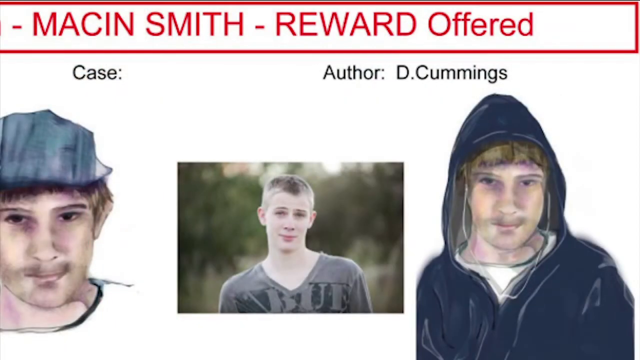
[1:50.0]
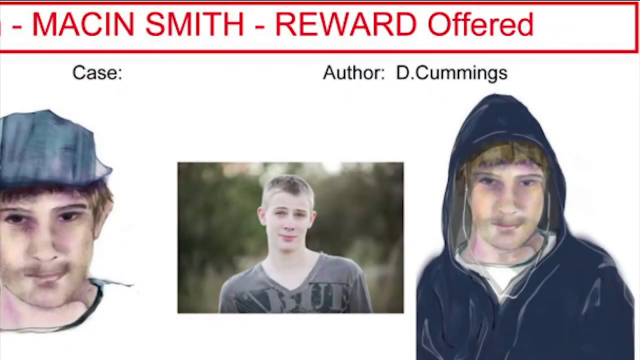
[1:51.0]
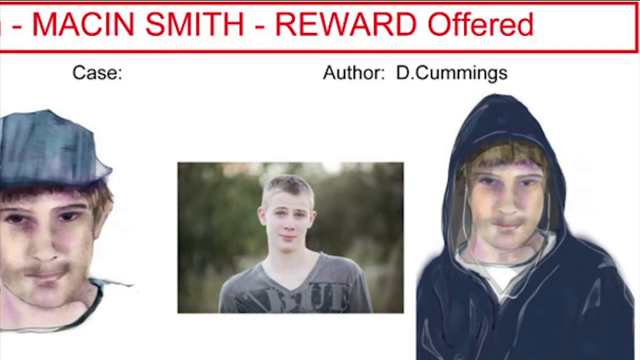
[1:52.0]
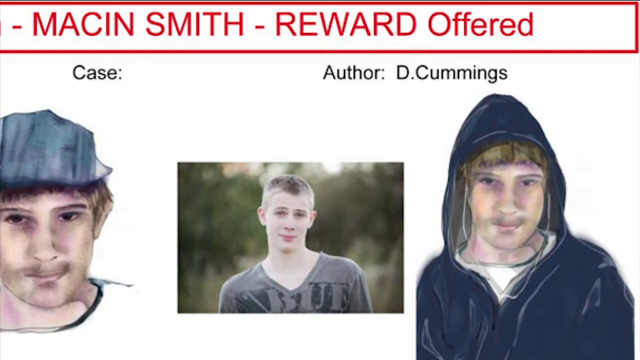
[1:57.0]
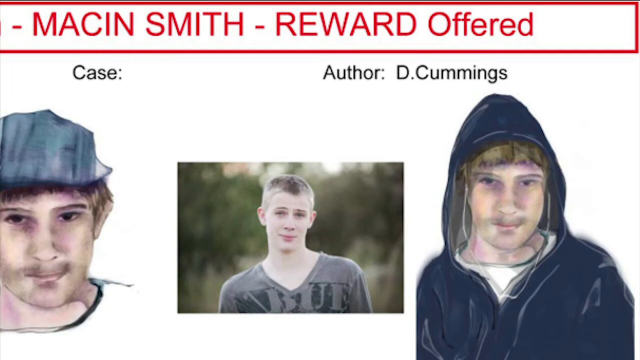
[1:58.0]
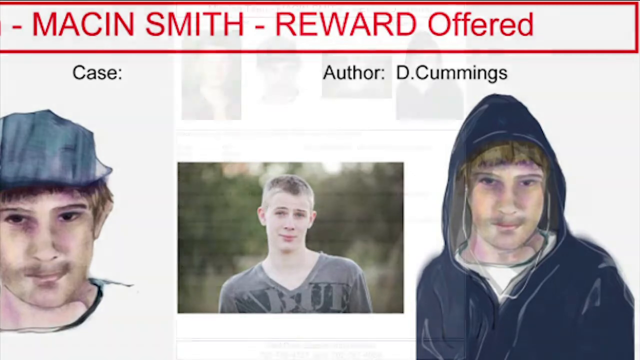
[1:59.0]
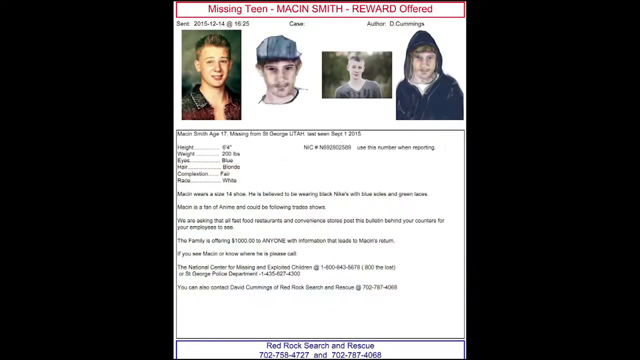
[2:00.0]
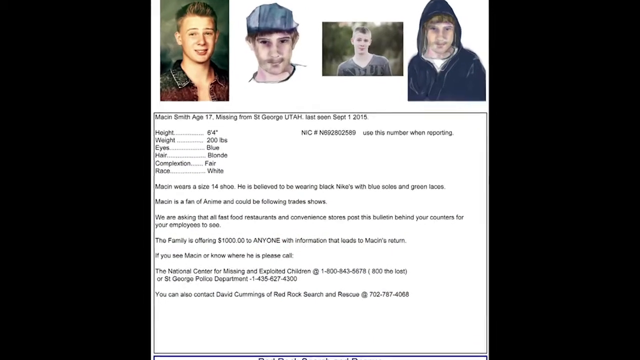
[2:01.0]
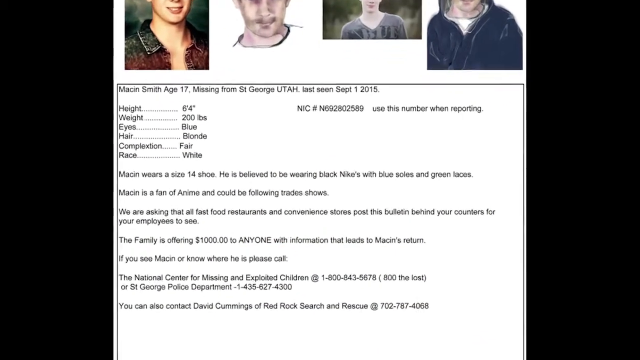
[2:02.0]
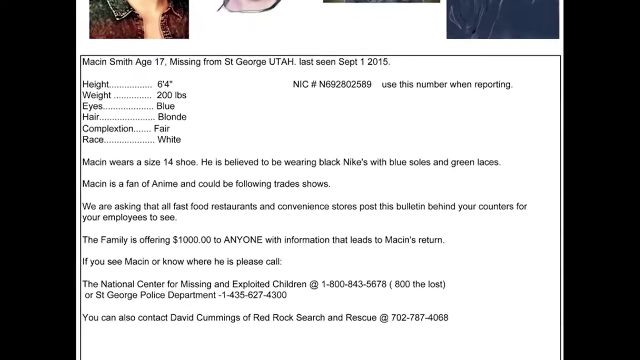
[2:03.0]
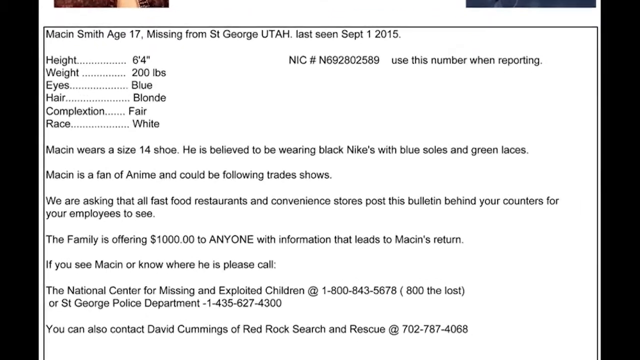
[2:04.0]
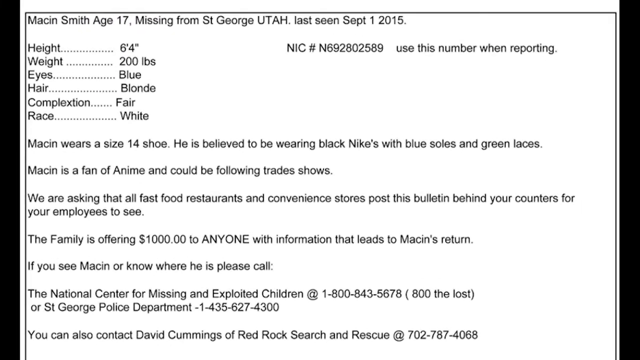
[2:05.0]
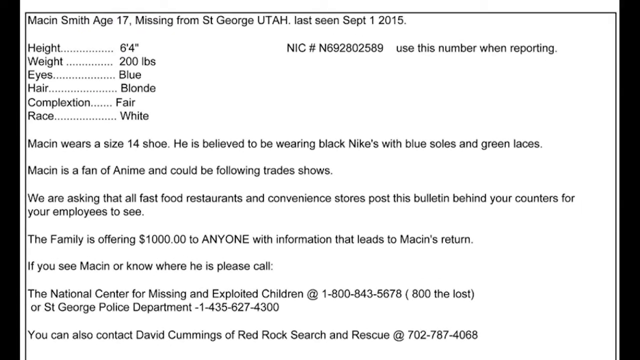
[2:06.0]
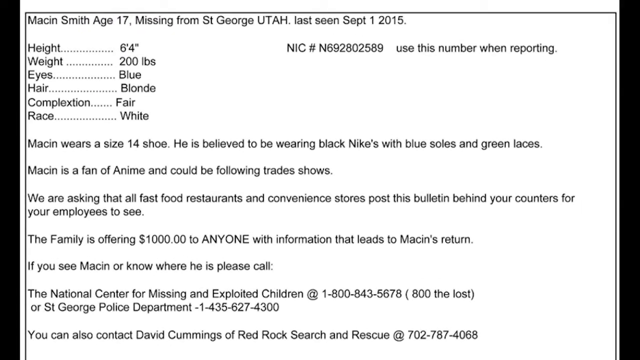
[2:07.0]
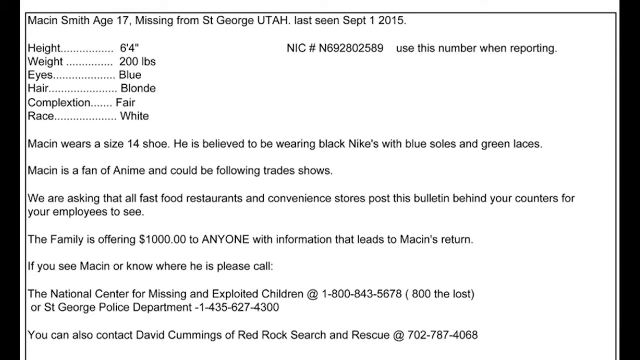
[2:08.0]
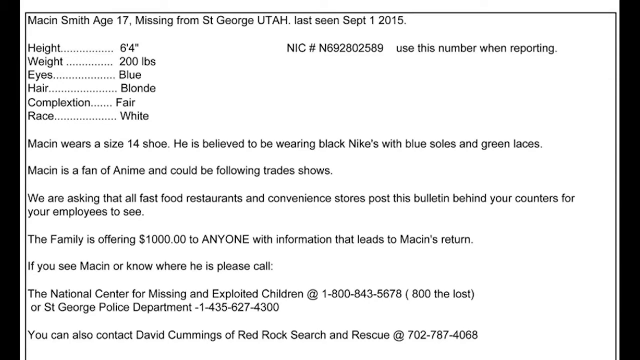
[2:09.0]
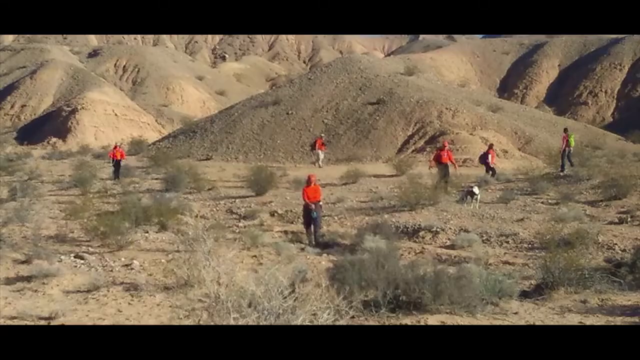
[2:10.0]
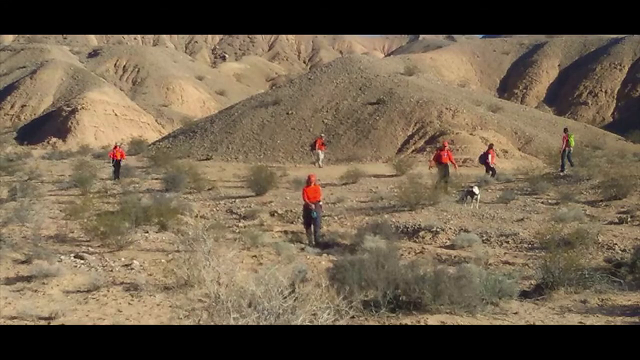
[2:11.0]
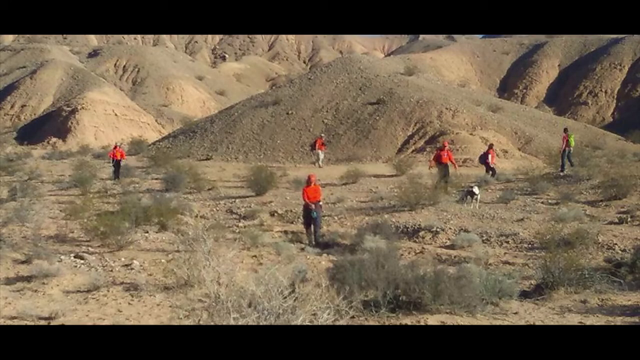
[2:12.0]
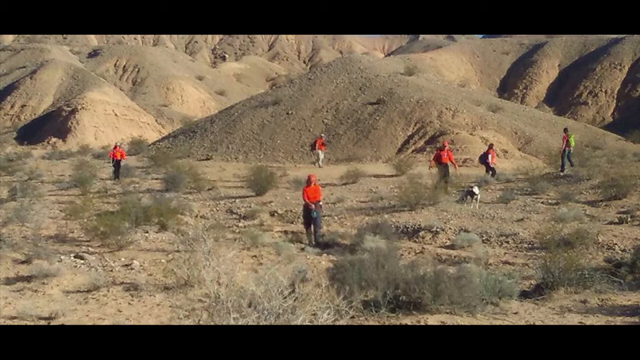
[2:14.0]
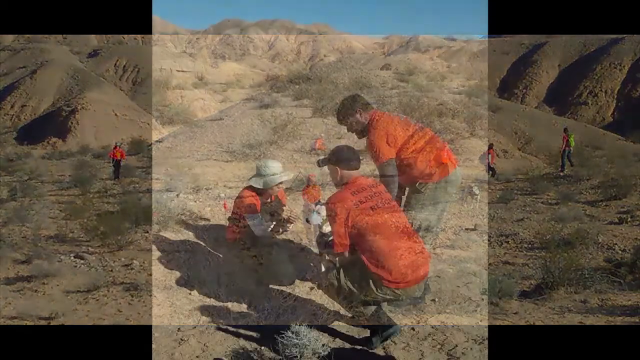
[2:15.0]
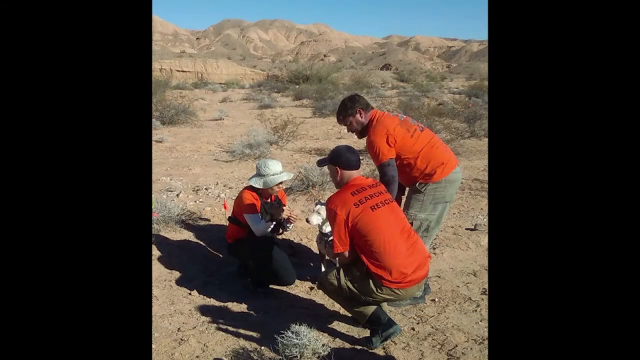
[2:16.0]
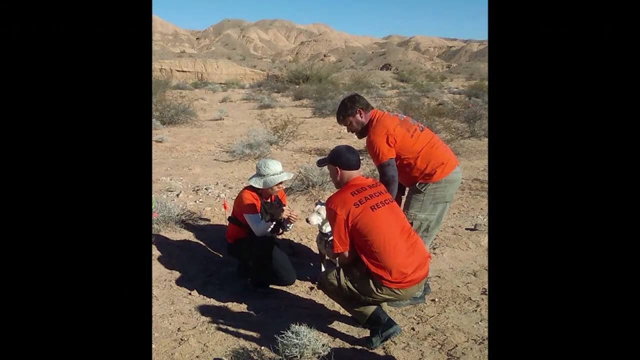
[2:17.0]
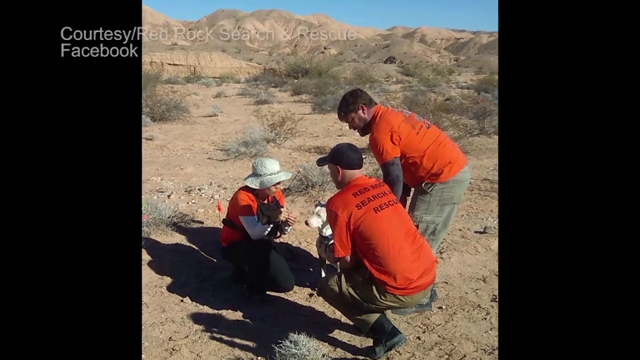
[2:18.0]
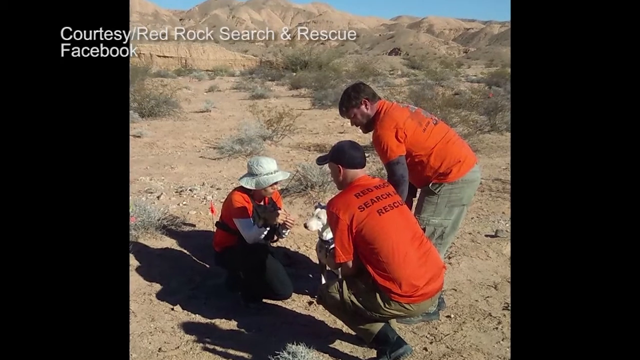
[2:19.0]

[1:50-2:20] A statement says that a reward for finding Macin Smith has been offered by Red Rock Search and Rescue, and the author of the post is identified as D. Cummins. The post features three photos of Macin: one of him looking shady and stubble-faced in a hat, one in the center of him looking fresh and clean, and one on the right of him wearing a hoodie and also looking a bit shady. The pictures stay on screen for a while, then the view zooms in on the missing poster, which reads: "Mackin is a fan of anime and could be following trade shows. We are asking that all fast food restaurant and convenience stores post this bulletin behind your counters for your employees to see. The family is offering $1,000 to anyone with information that leads to Mackin's return. If you see Mackin or know where he is, please call."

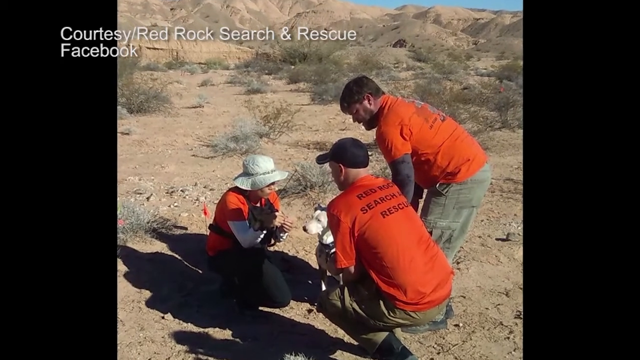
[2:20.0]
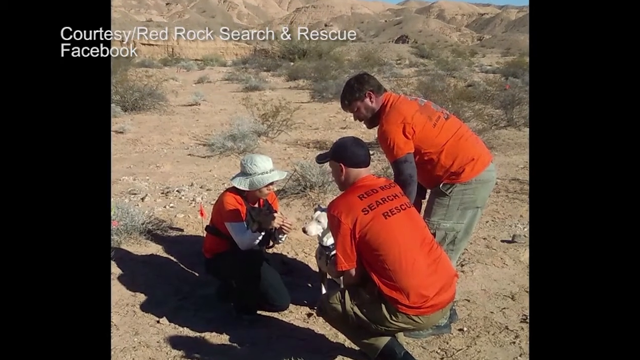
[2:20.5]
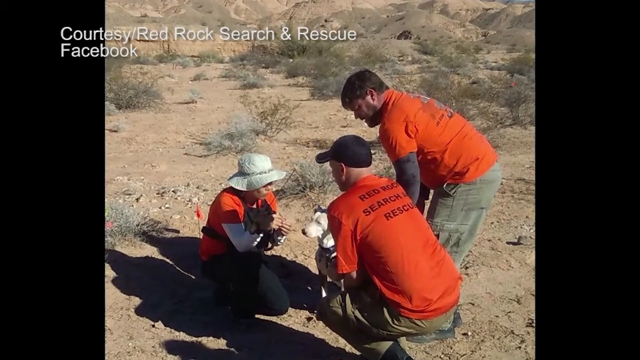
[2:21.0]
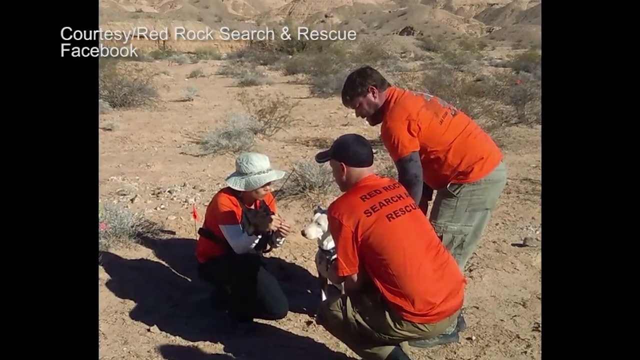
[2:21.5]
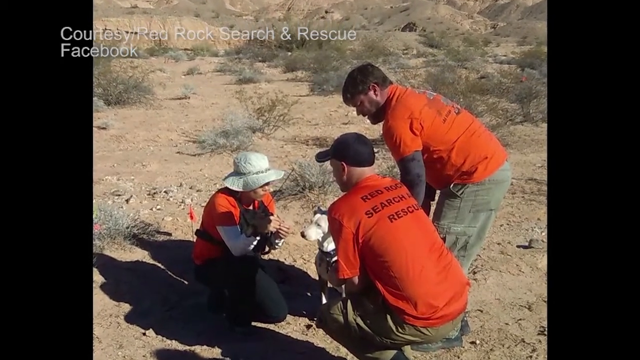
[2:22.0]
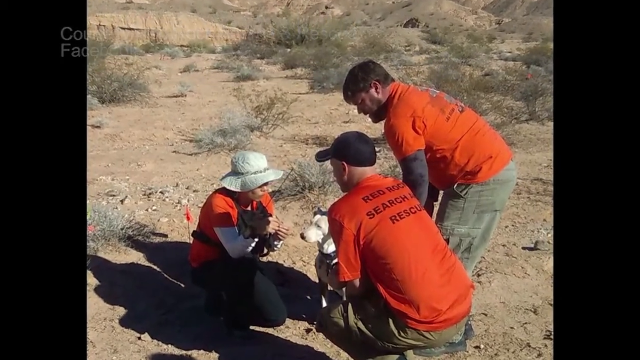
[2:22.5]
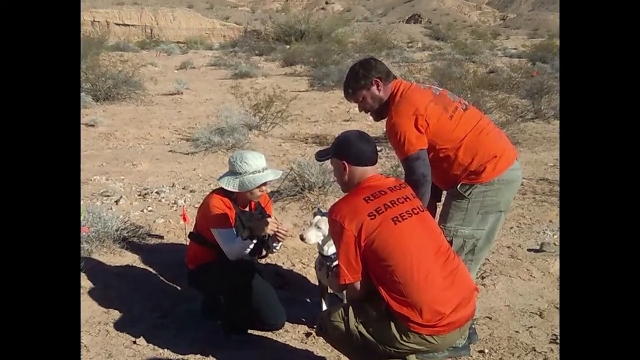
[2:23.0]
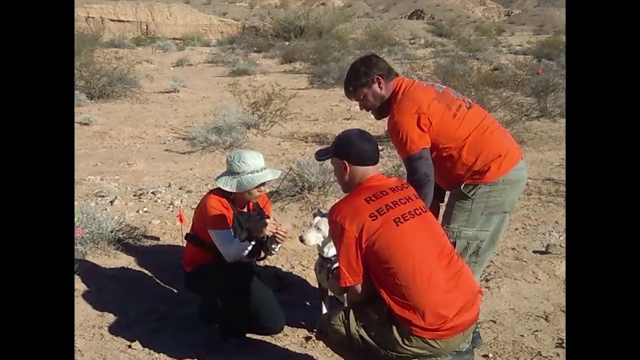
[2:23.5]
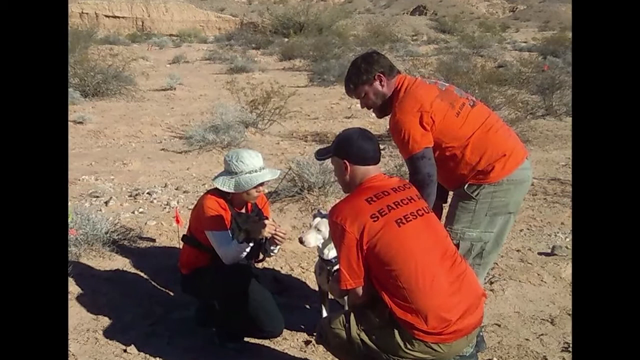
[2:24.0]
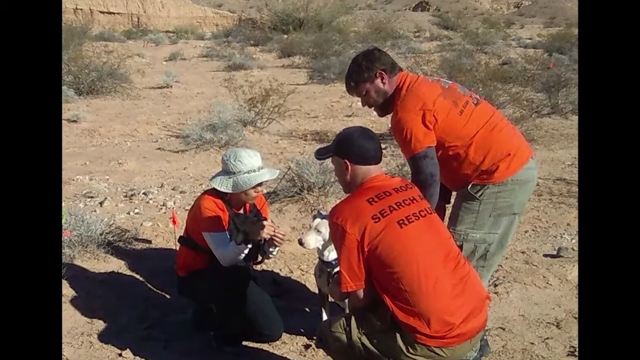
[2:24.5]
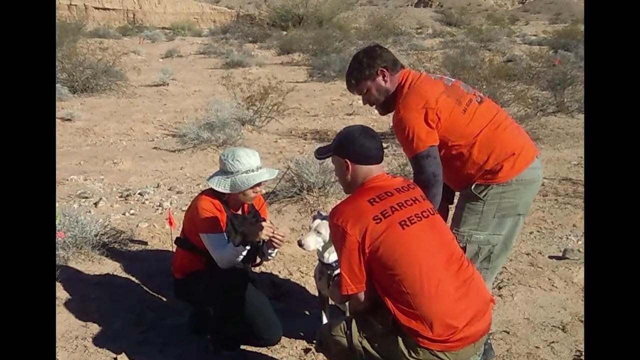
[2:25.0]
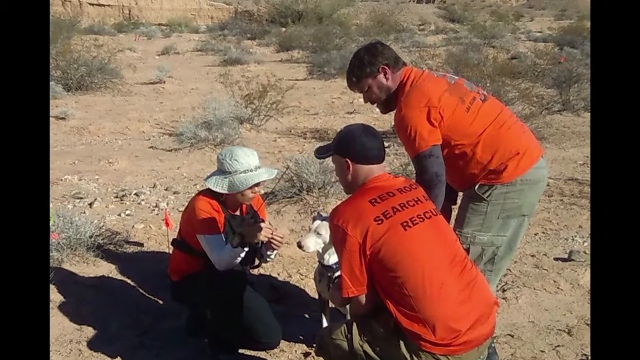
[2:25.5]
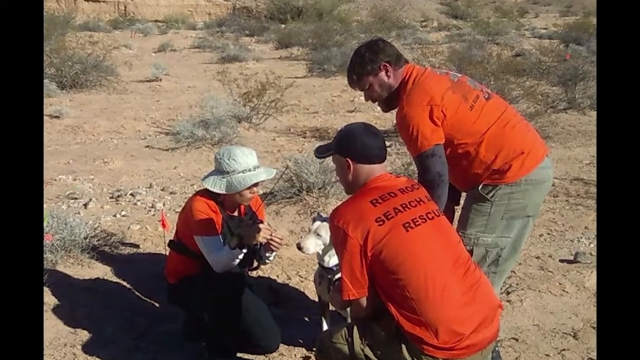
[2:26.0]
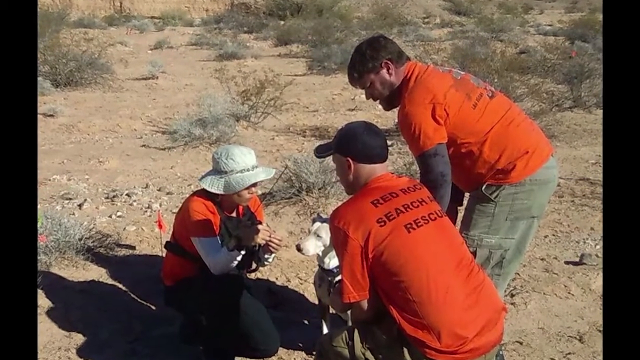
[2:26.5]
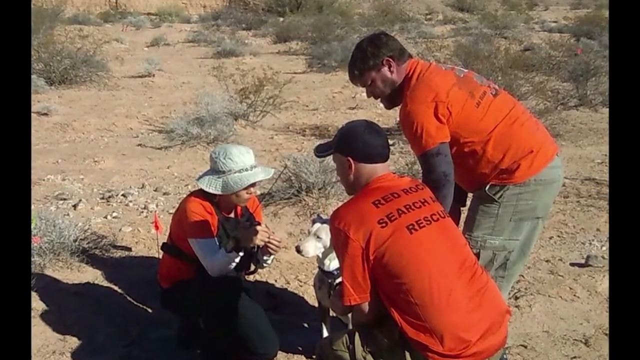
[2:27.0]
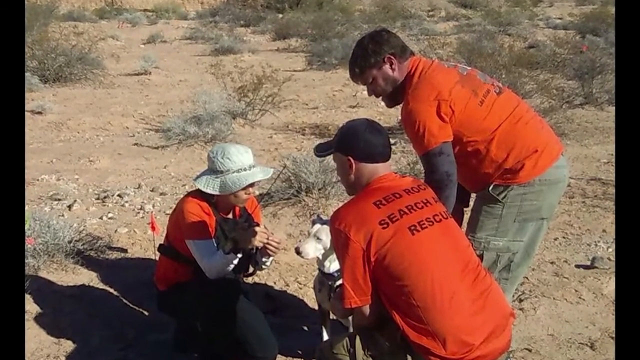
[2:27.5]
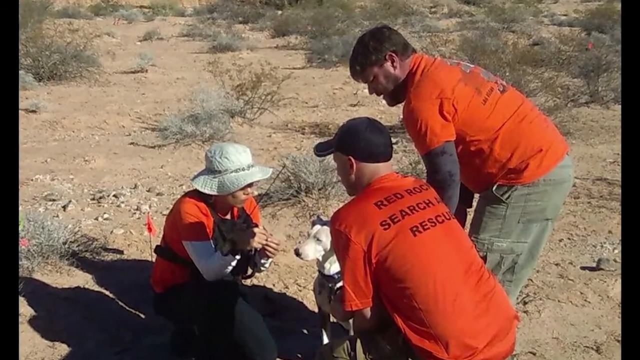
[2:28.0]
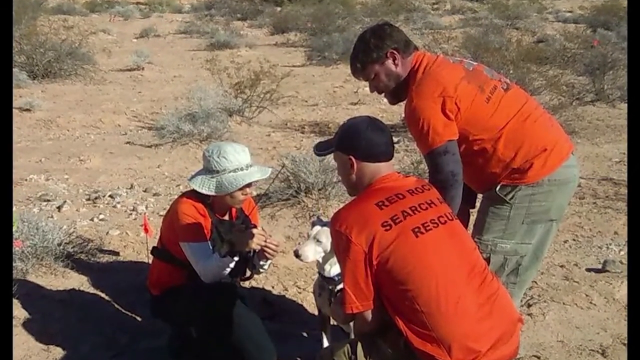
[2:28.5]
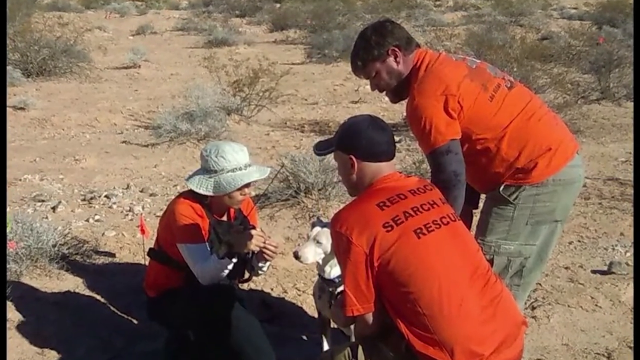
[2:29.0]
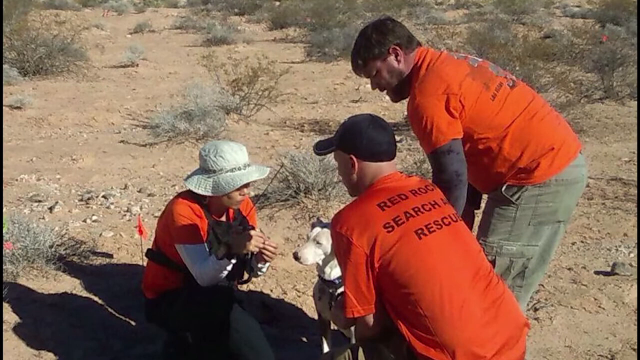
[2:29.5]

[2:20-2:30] Three people in orange t-shirts reading "Red Rock Search and Rescue" on the back are hunched in a triangle on the ground, with a K-9 between them. The woman on the left wears a Panama-type hat and a long-sleeved white undershirt under her orange Search and Rescue shirt, and seems to be holding a radio, with an antenna protruding from her chest and pointing to the sky. Behind them is unforgiving terrain at Red Rock Search and Rescue's base in Utah. The camera zooms in on the three individuals, who seem to be conferring and look serious.